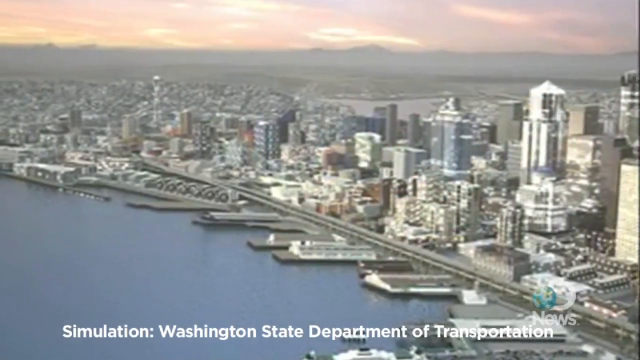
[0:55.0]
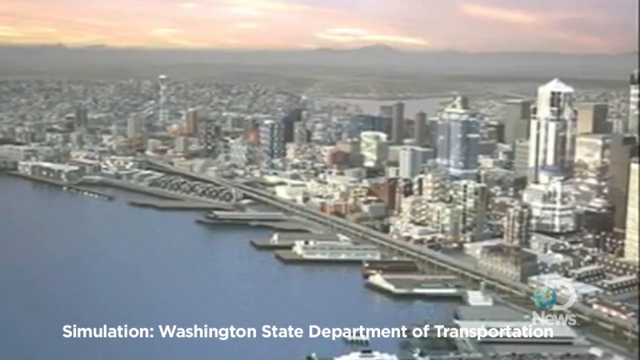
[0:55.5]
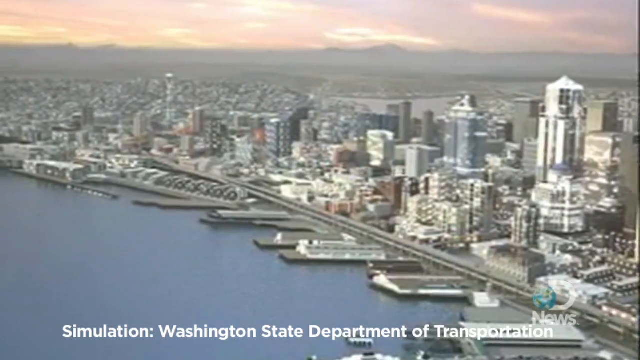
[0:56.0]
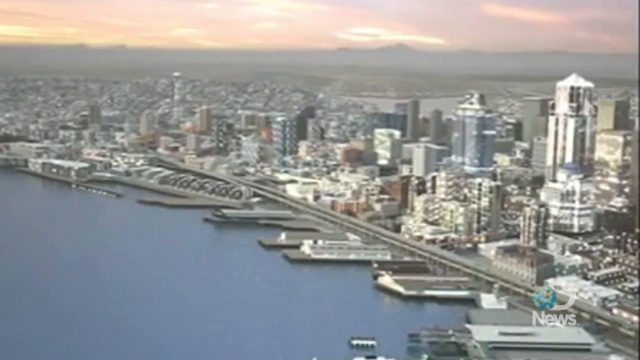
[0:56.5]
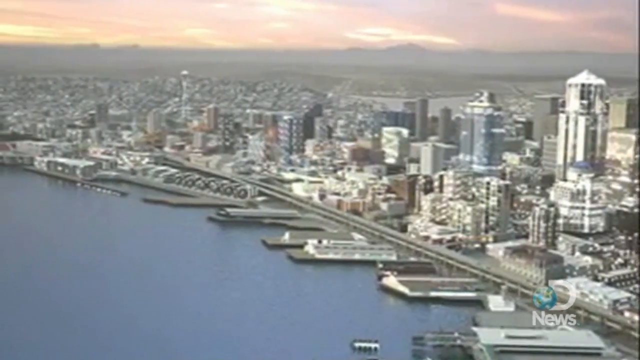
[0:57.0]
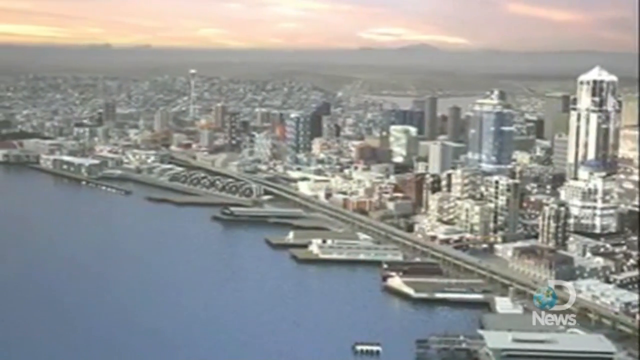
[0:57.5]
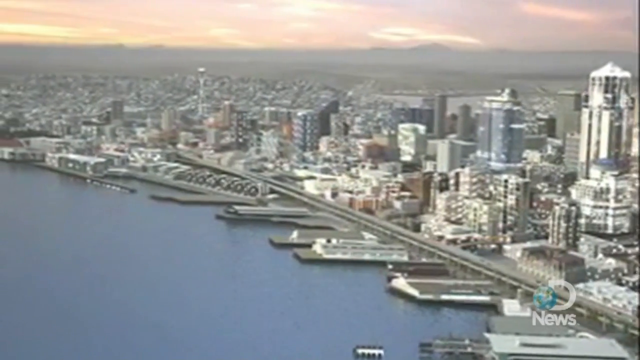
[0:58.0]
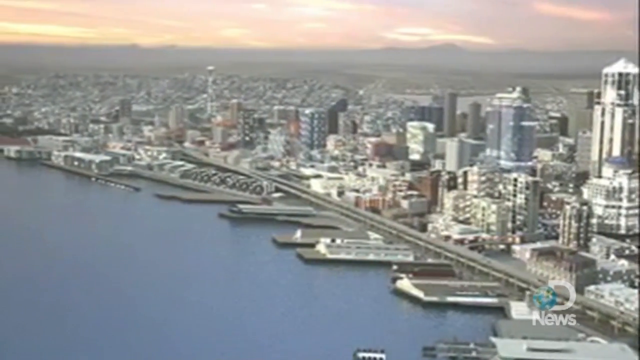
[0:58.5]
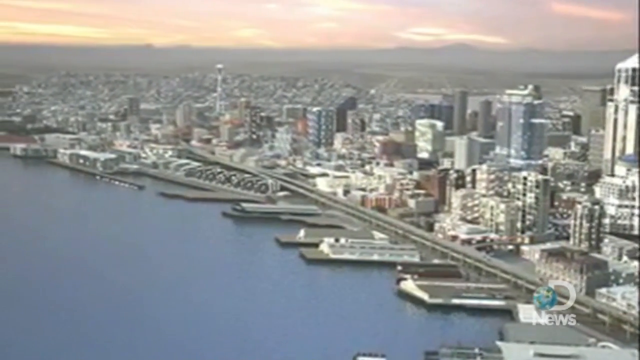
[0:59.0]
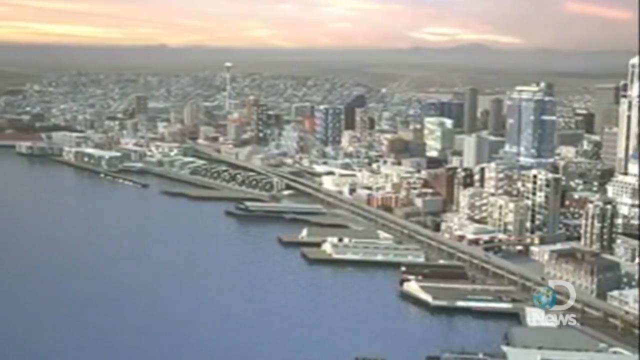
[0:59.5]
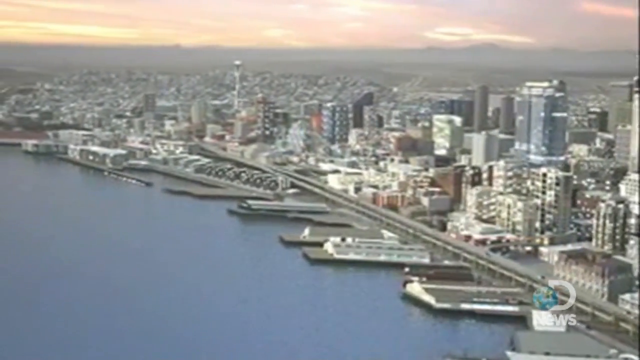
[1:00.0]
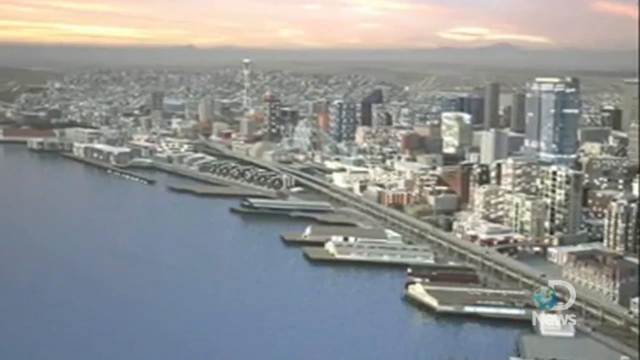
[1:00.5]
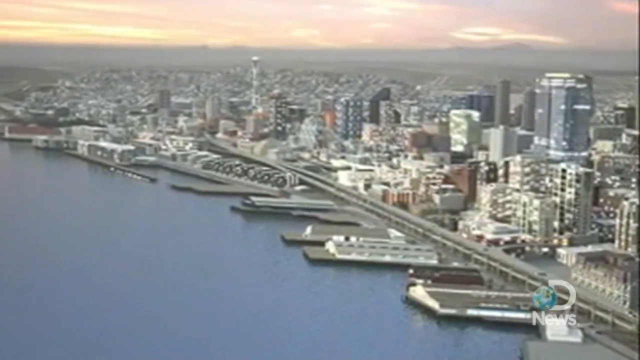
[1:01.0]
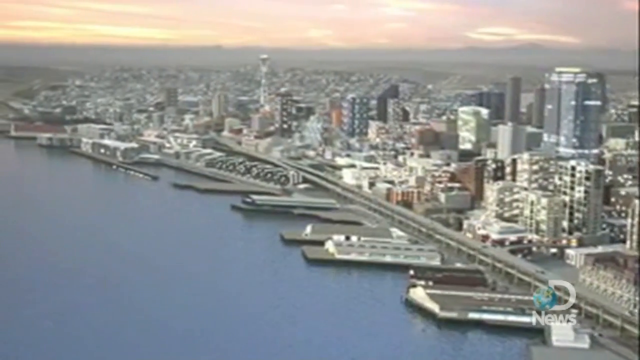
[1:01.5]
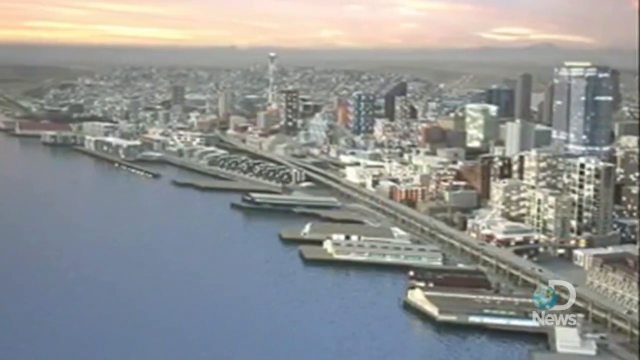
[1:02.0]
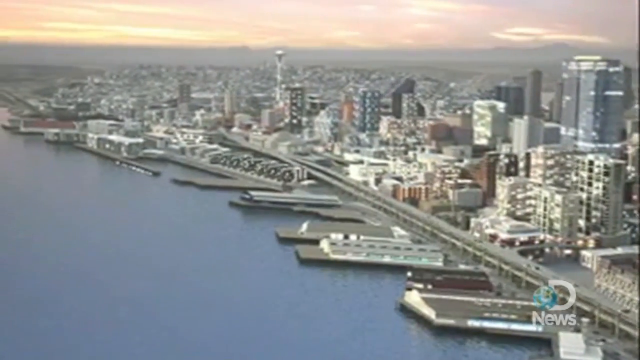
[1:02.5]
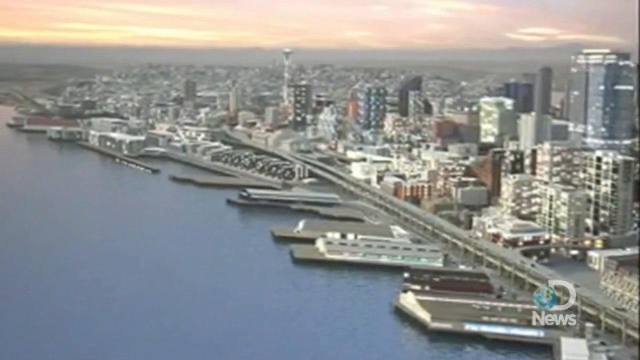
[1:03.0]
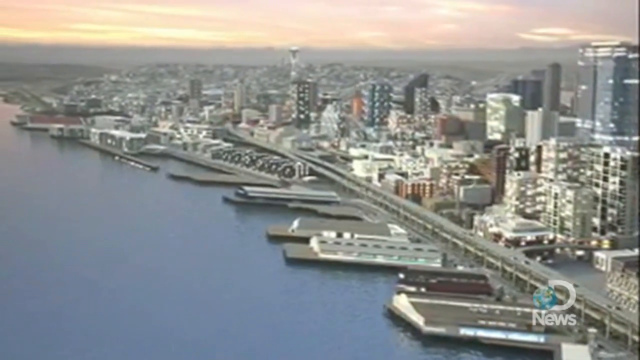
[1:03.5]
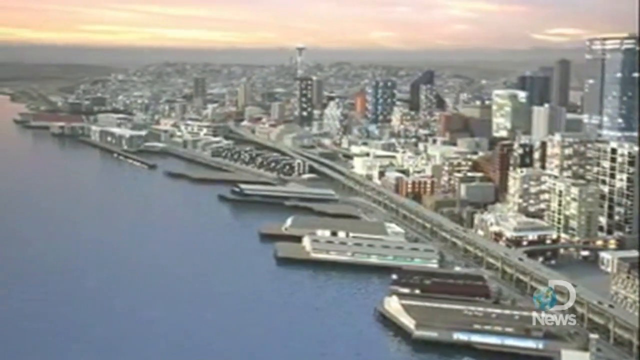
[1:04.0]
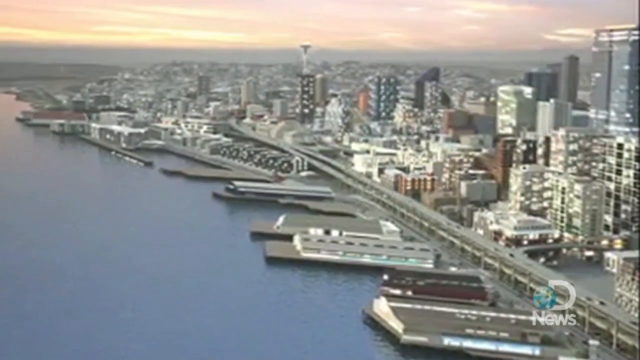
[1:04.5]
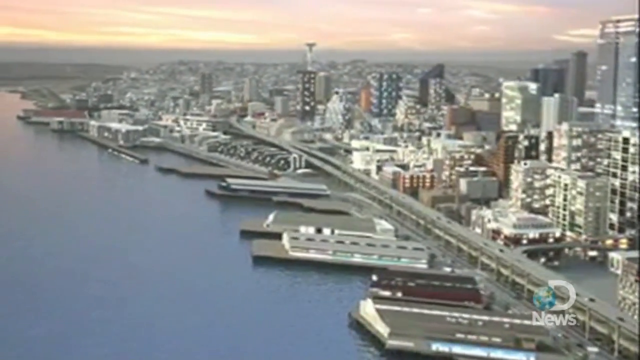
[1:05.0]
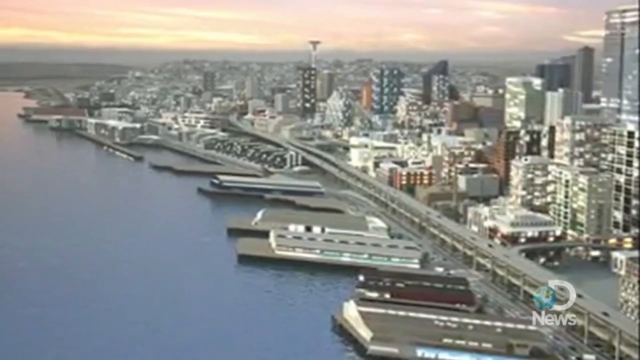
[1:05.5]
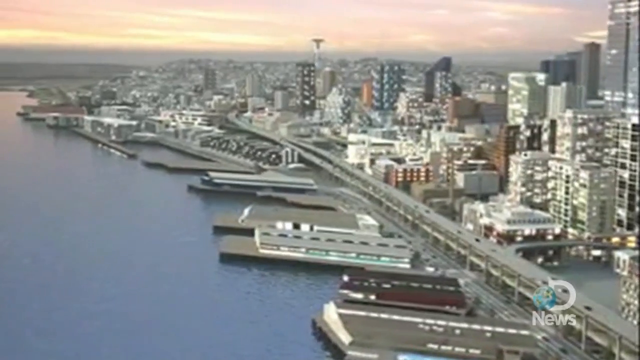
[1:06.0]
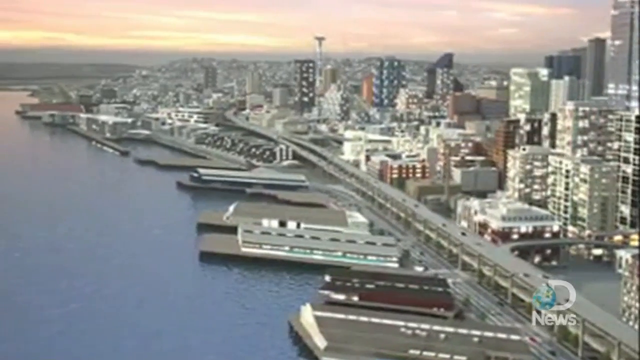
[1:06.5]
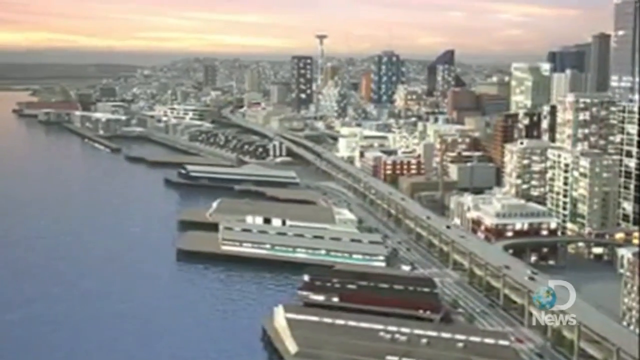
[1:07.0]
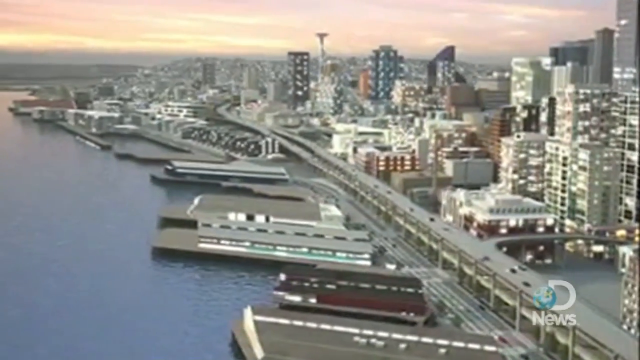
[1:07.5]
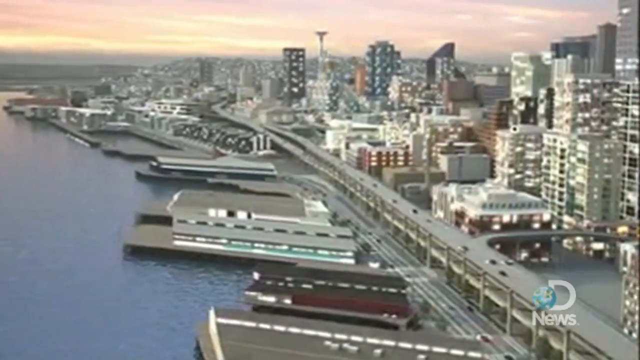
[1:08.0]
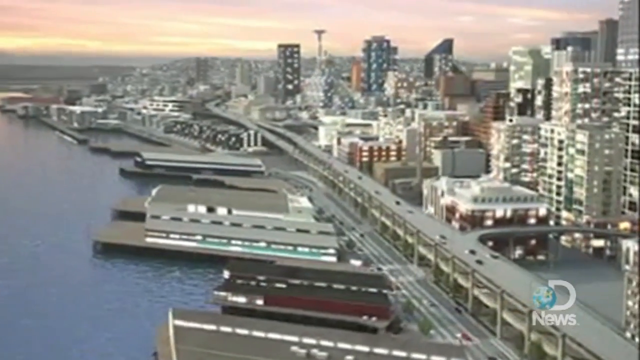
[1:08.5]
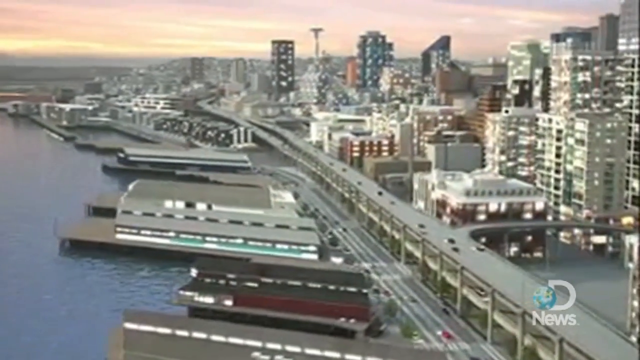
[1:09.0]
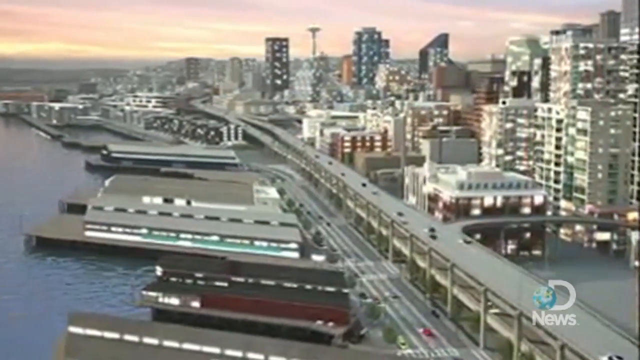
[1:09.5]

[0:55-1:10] Discovery News shows the coastline of the Pacific Northwest, apparently Seattle, with highways full of cars in a very heavily populated, congested area with buildings. This footage is from the Washington State Transportation Department and looks like a 3D model; it appears to be a computer-generated model rather than the actual city. A city skyline is shown, and there are docks along the edge in the water.